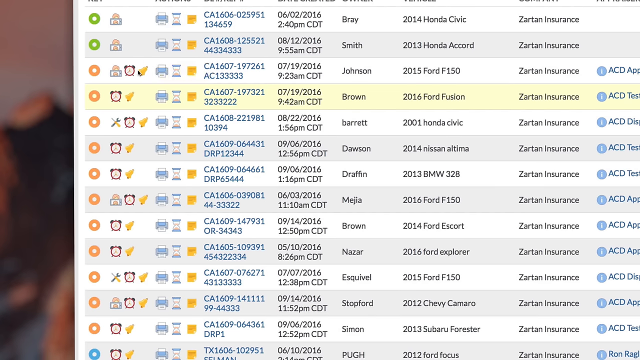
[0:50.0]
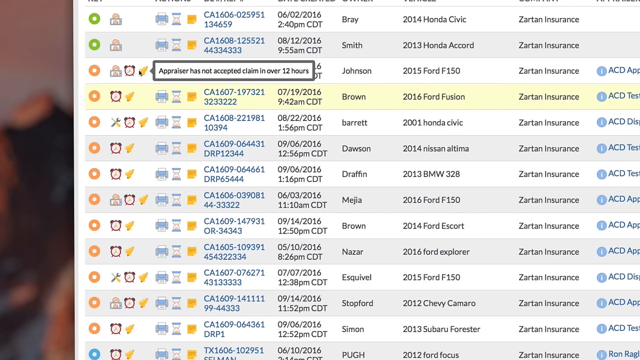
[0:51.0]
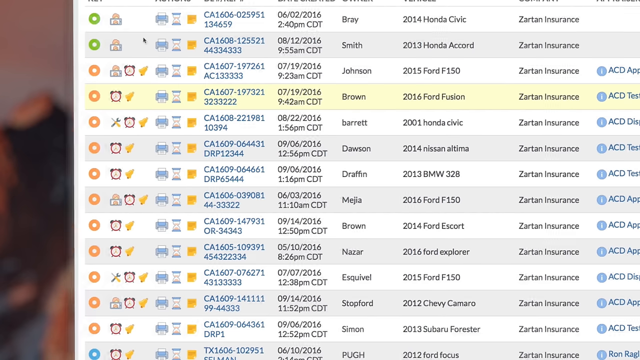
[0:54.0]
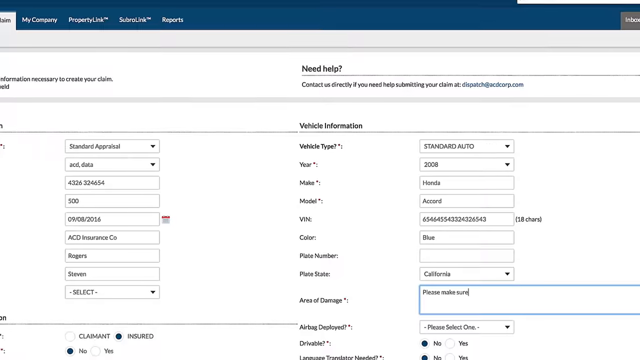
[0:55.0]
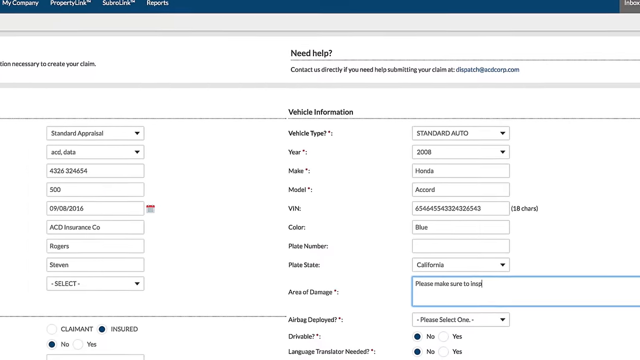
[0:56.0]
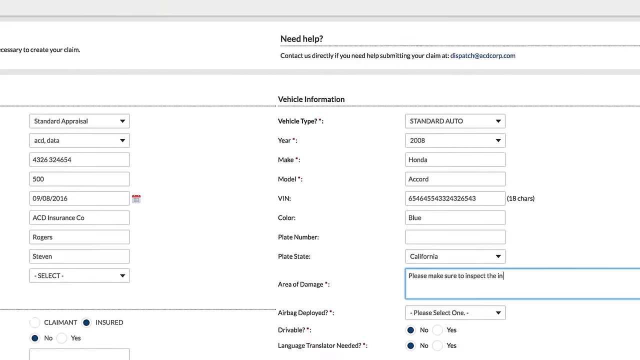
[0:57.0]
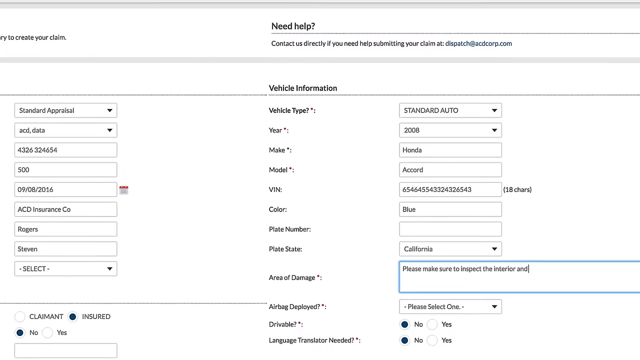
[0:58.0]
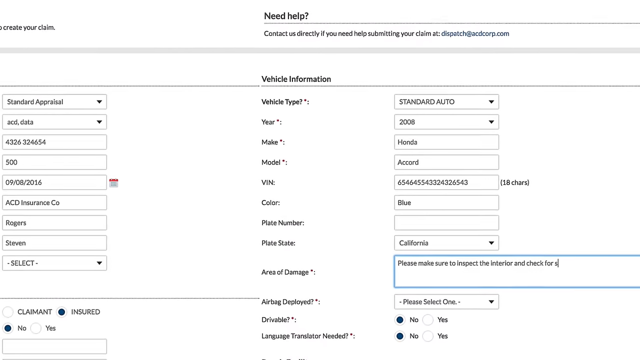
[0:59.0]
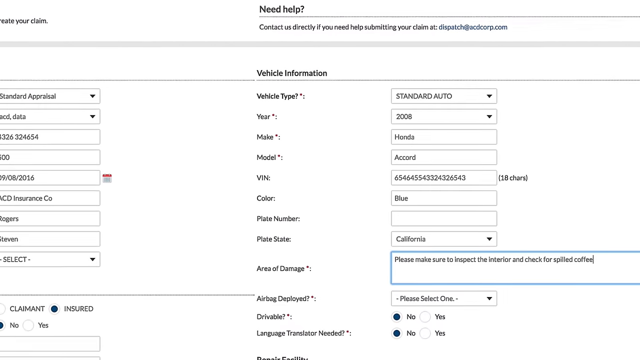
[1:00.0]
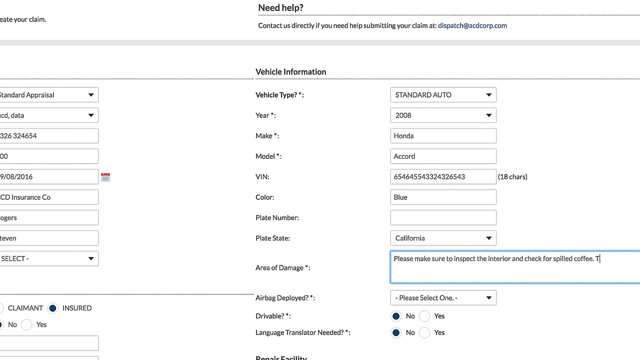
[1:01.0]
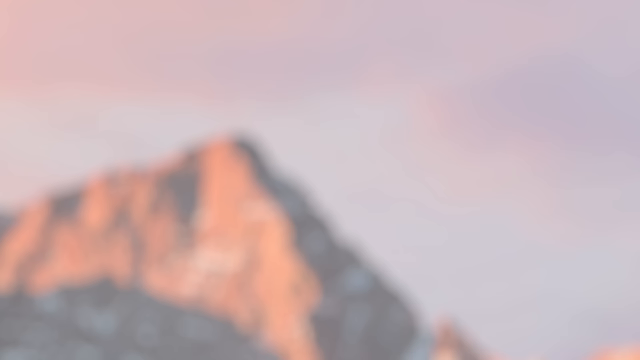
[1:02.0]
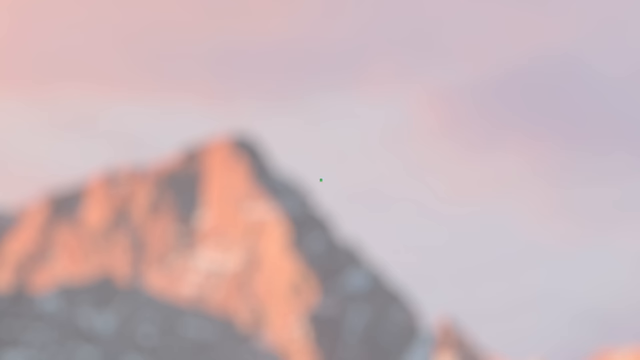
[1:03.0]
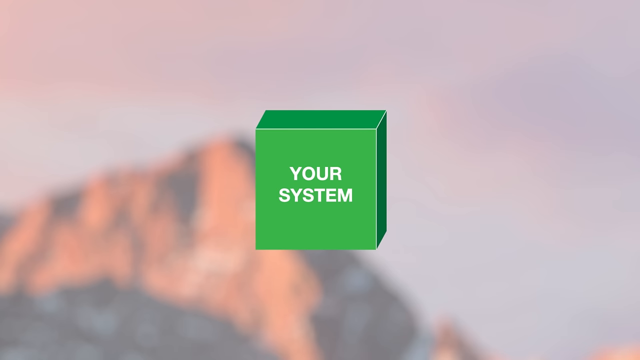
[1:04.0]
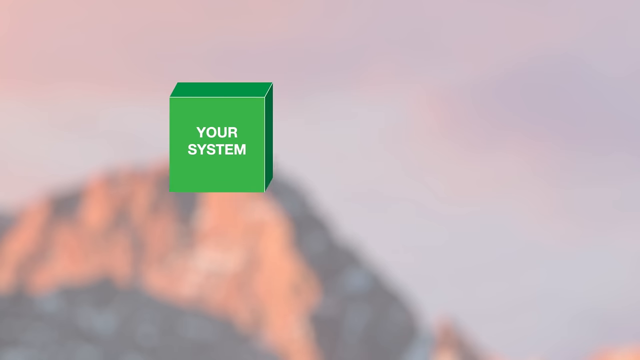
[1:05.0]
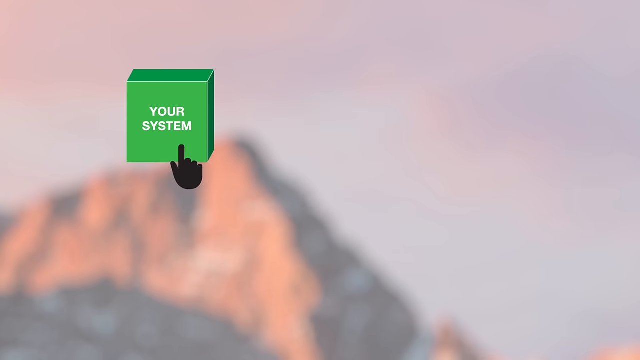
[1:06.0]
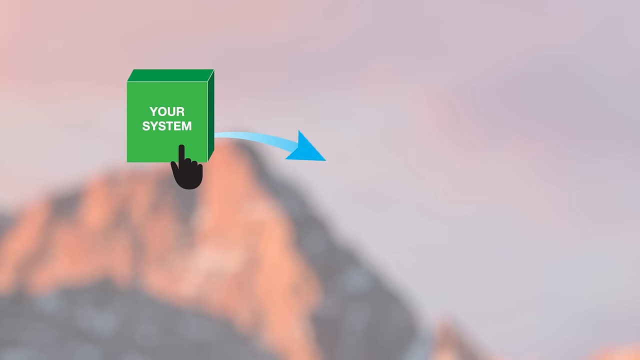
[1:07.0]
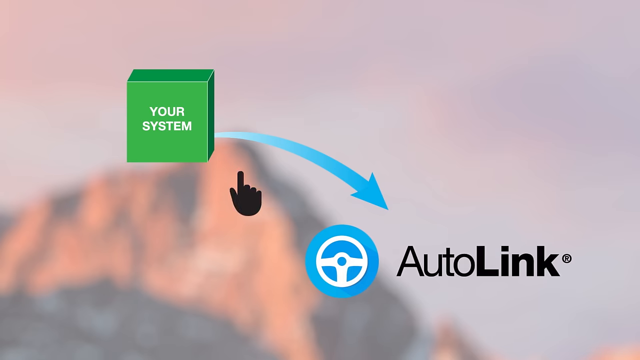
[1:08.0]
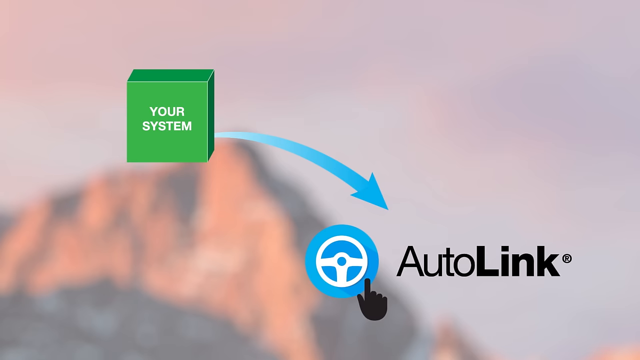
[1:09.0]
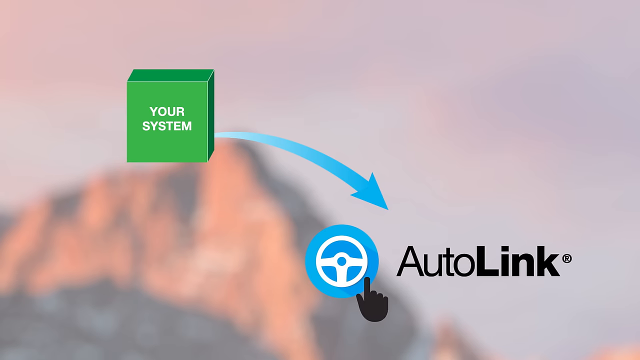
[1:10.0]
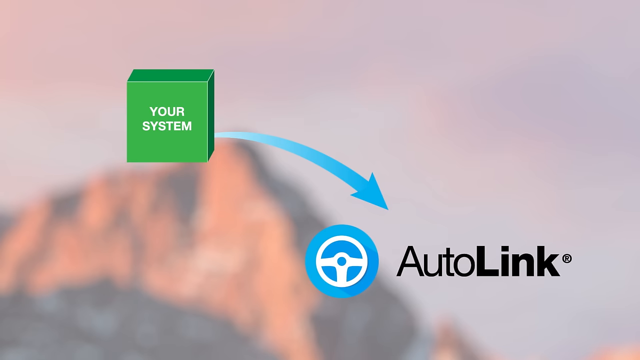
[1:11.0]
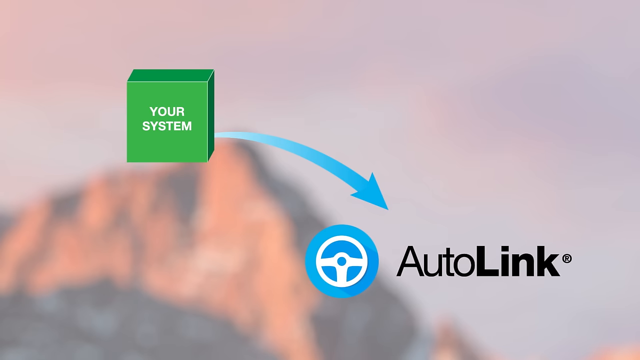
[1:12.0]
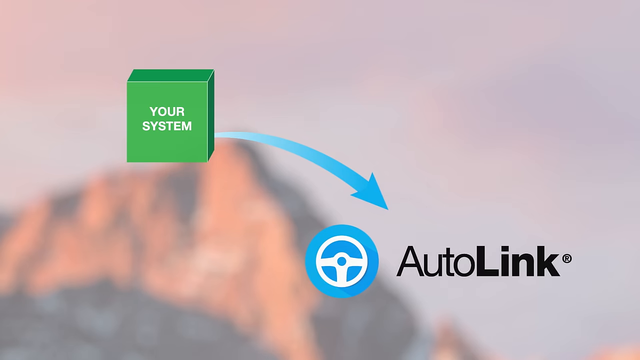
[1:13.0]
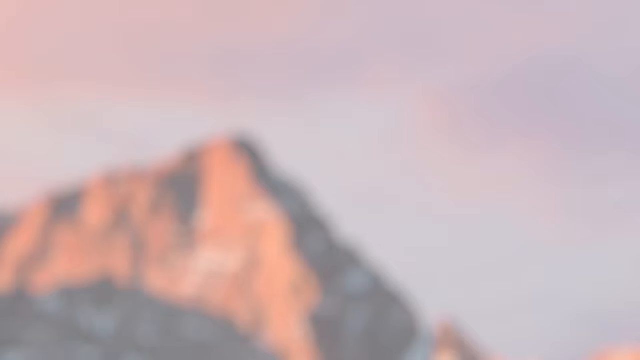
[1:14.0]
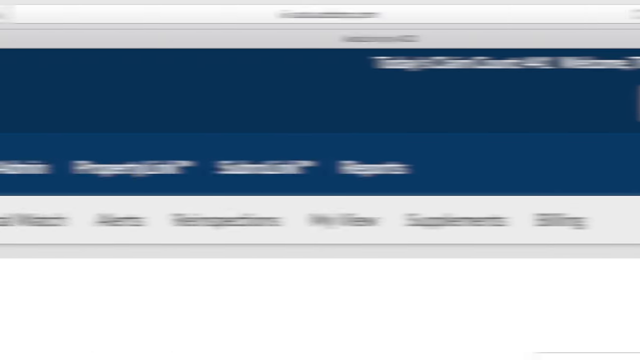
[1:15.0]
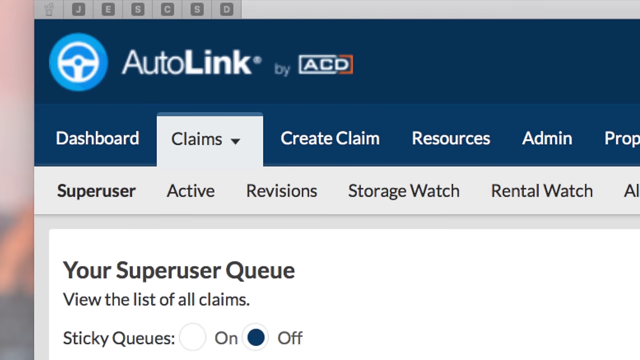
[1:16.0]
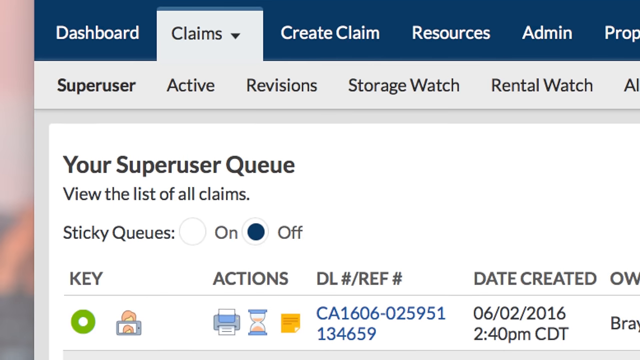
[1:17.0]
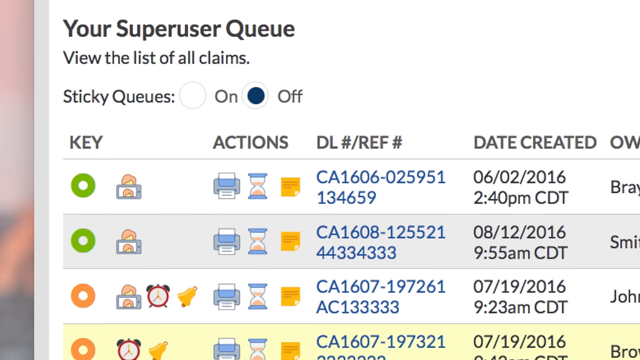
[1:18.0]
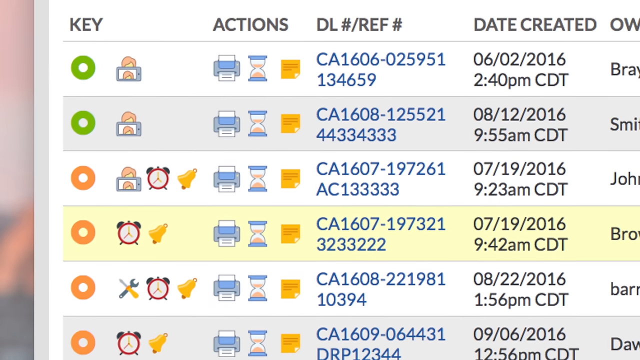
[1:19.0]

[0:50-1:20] To the right of the 48-hour status icon is another menu item, a sort of yellow triangle that says "appraiser has not accepted claim in over 12 hours", and the cursor hovers over this the whole time. The screen then wipes out and wipes back in to show a white form. On the left are several boxes: a drop-down box with "standard appraisal" at the top, then the number 4326324654, the number 500, the date 09 08 2016, "acd insurance co", "rogers steven", and finally, at the bottom of that list of form fields, a drop-down box that says "select". On the right is another set of form fields headed "vehicle information": vehicle type, a drop-down box showing "standard auto"; year 2008; make Honda; model Accord; VIN 6546455433244326543, with "18 characters" in brackets; colour blue; plate number, which is empty; and plate state California. Area of damage is highlighted in blue, and "please make sure to inspect the interior and check for spilled coffee." is being typed into that box. The view scrolls slightly down towards the bottom right, revealing an airbag deployed item. The screen then fades to a blurred image of a sandstone mountain in the background, with a green cube that has the words "your system" printed on top and a black index finger pointing up at "your system". The finger appears to click the button, and a blue arrow comes out to the right, pointing at the AutoLink company logo. The finger then goes down to the AutoLink logo, and the image stays for a while before fading away. The website then pans quickly across the screen from left to right, leaving "AutoLink by ACD" at the top left with the claims menu tab open. It scrolls down to show "your super user queue" and a series of different jobs in the queue.